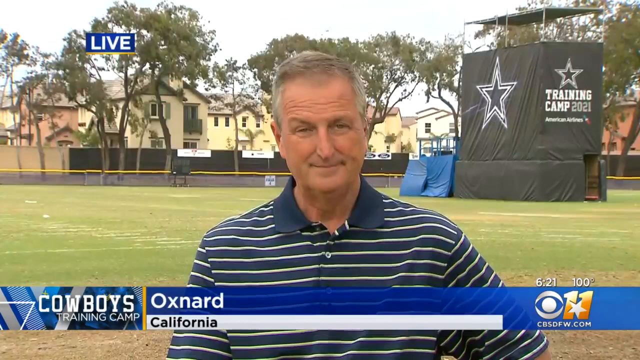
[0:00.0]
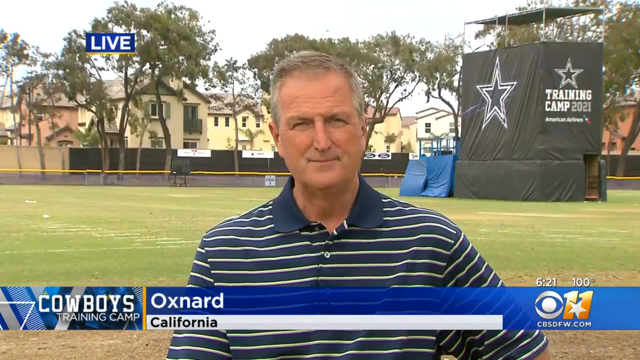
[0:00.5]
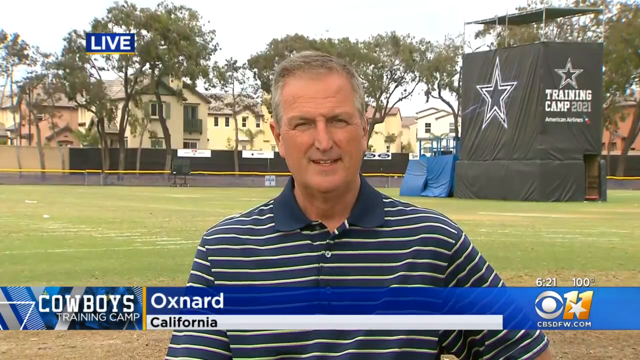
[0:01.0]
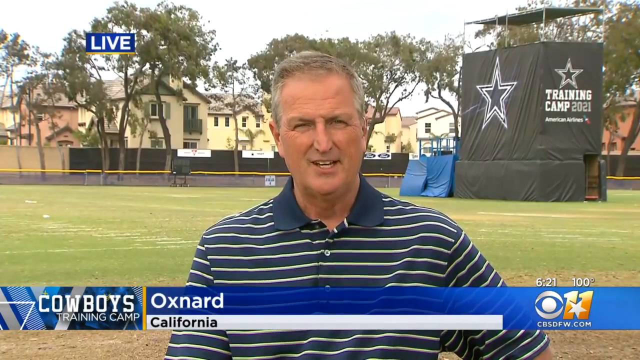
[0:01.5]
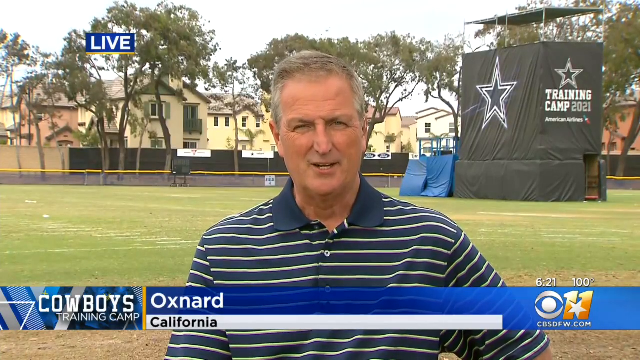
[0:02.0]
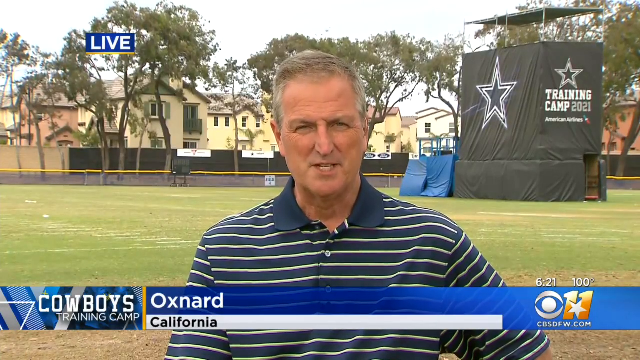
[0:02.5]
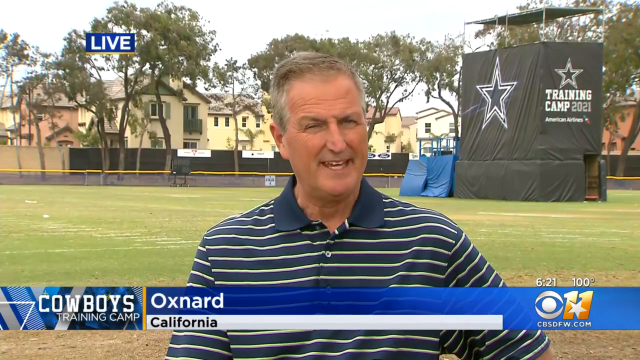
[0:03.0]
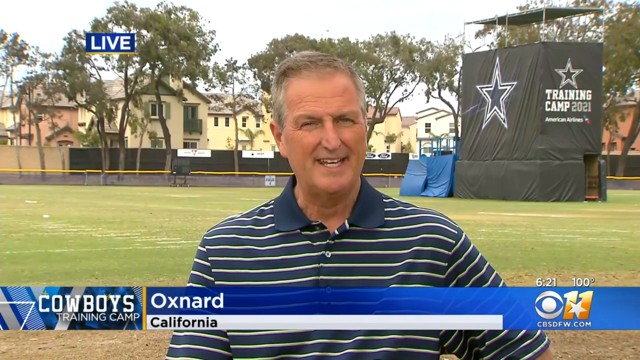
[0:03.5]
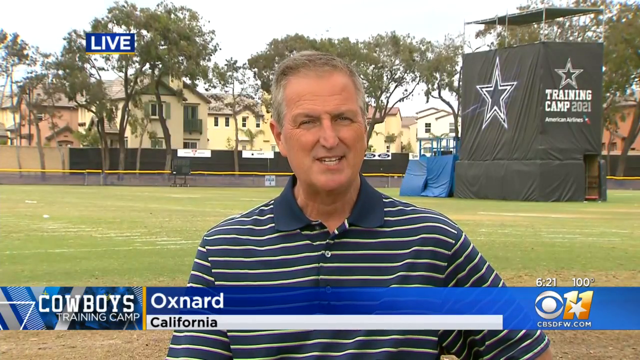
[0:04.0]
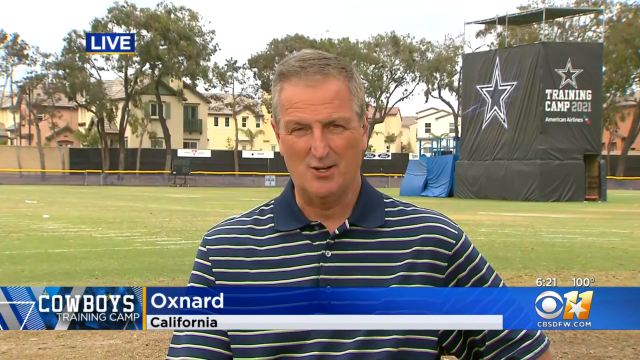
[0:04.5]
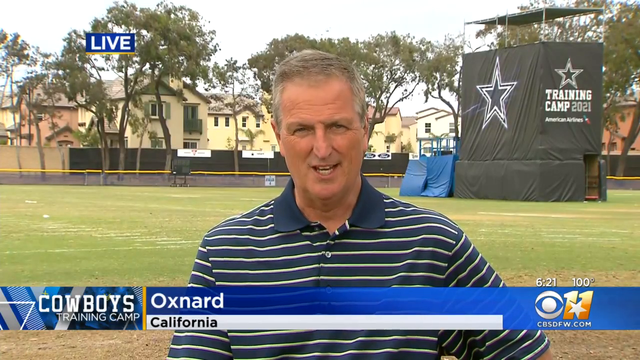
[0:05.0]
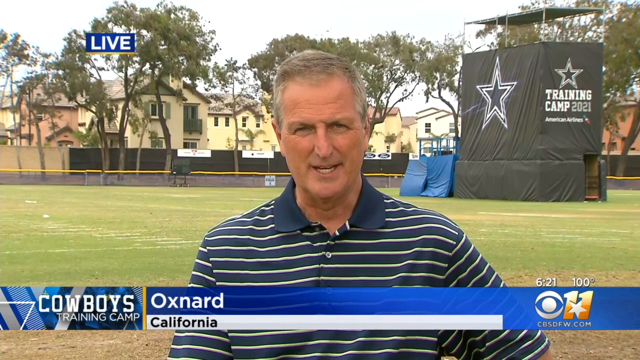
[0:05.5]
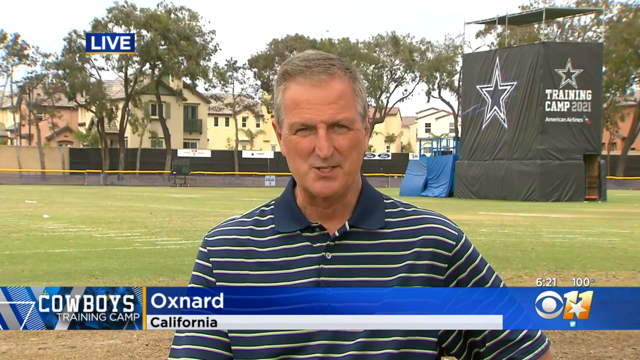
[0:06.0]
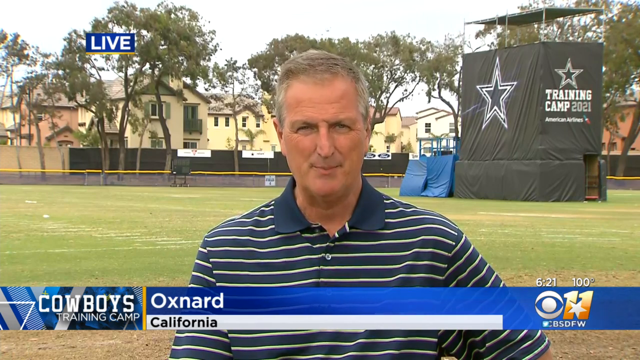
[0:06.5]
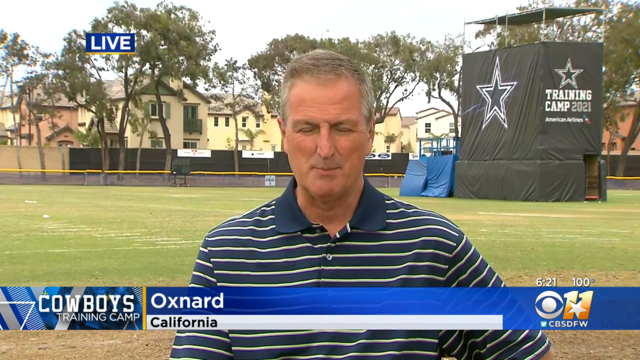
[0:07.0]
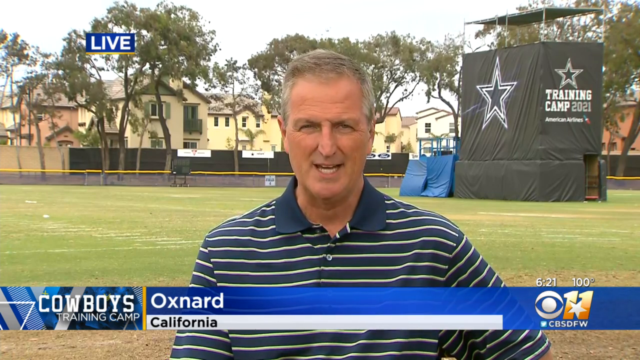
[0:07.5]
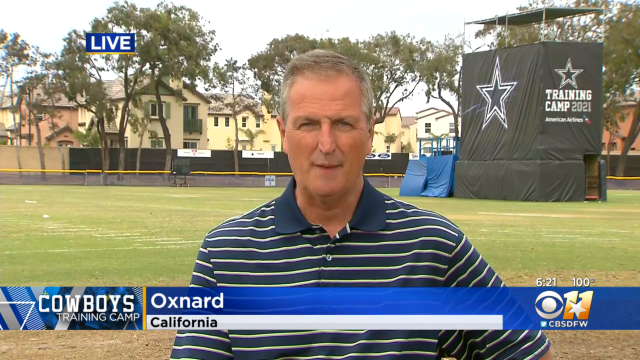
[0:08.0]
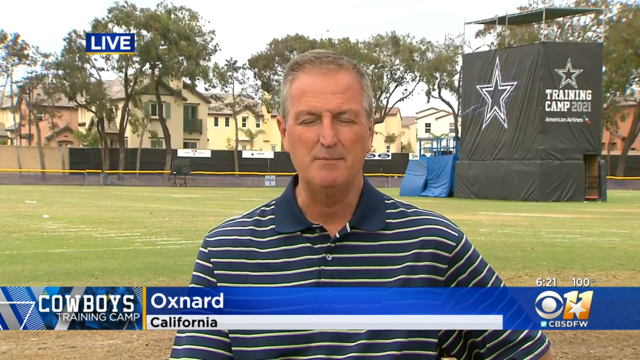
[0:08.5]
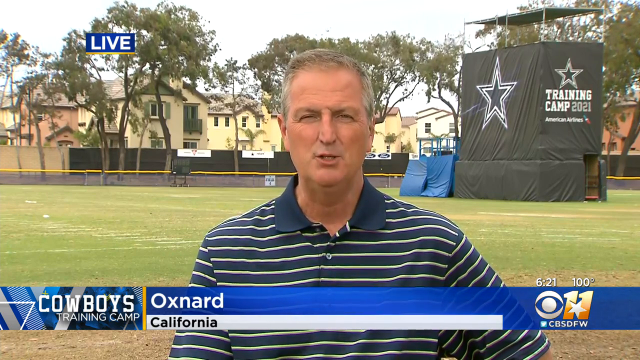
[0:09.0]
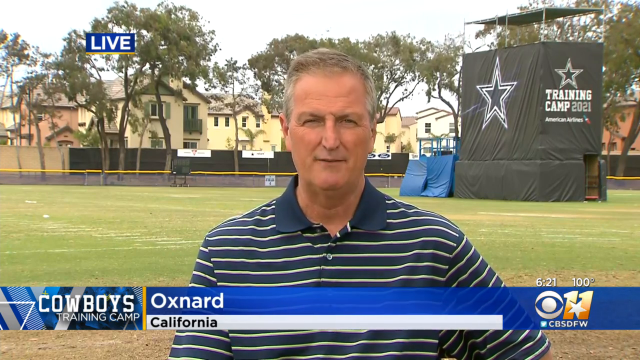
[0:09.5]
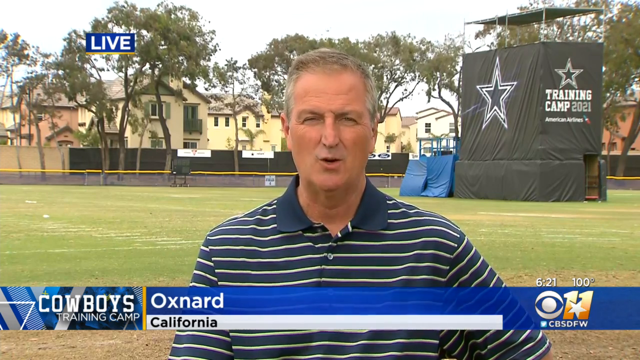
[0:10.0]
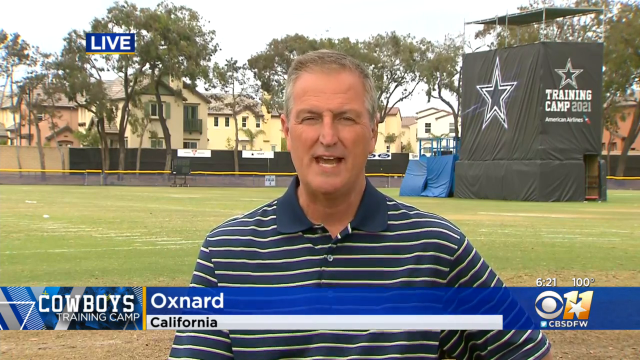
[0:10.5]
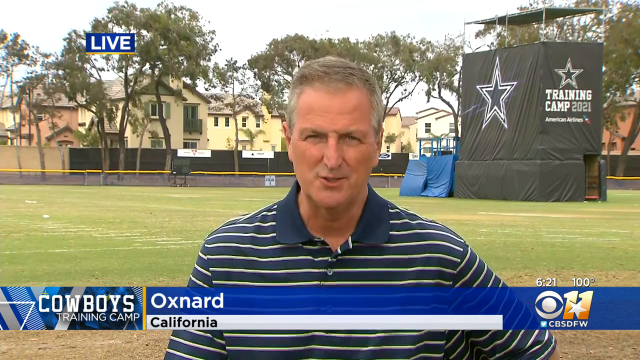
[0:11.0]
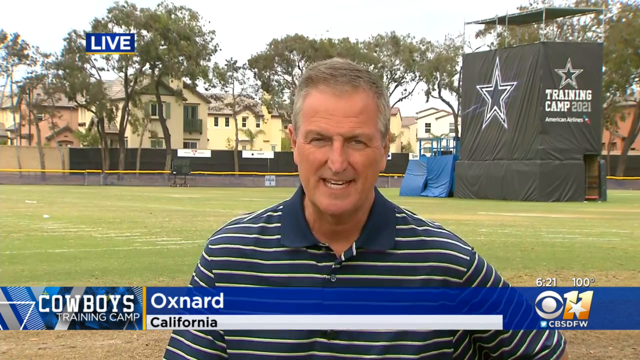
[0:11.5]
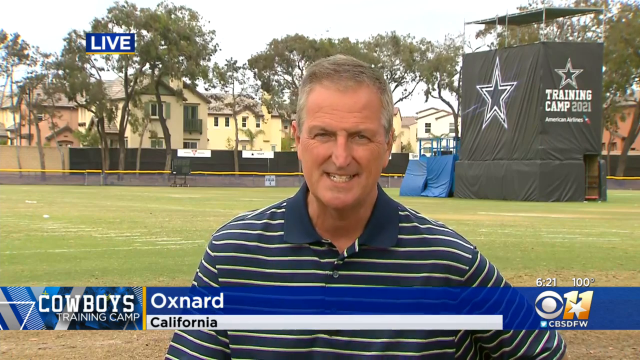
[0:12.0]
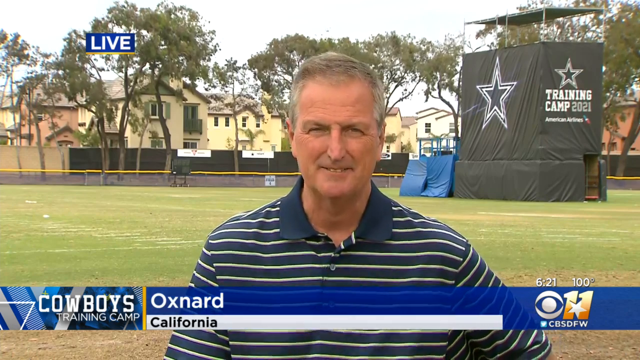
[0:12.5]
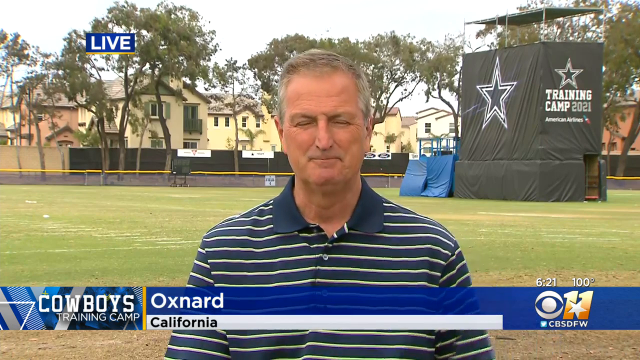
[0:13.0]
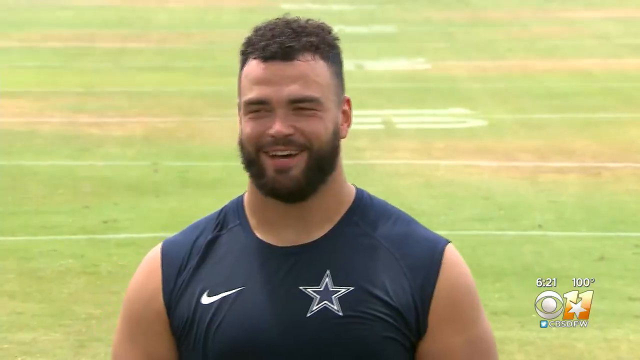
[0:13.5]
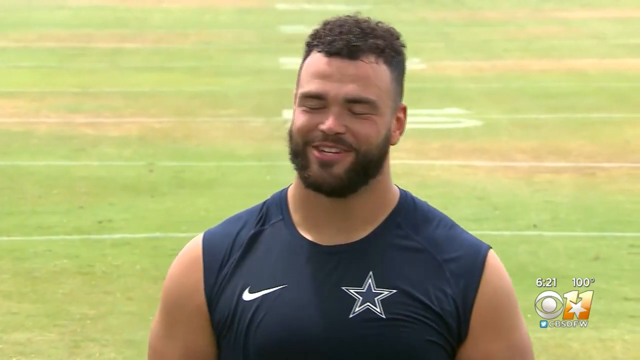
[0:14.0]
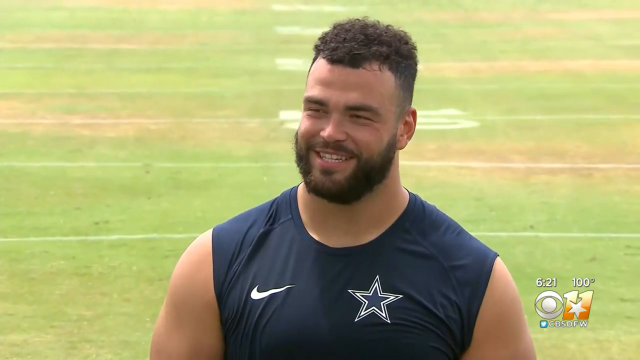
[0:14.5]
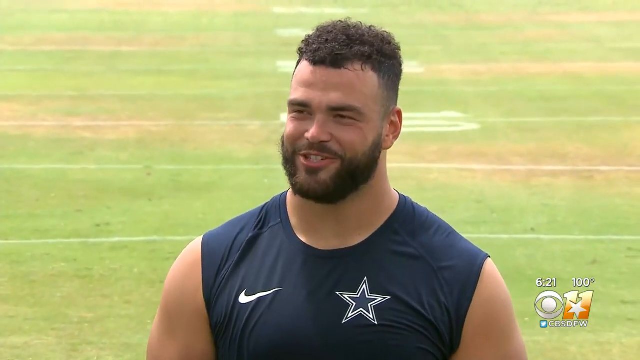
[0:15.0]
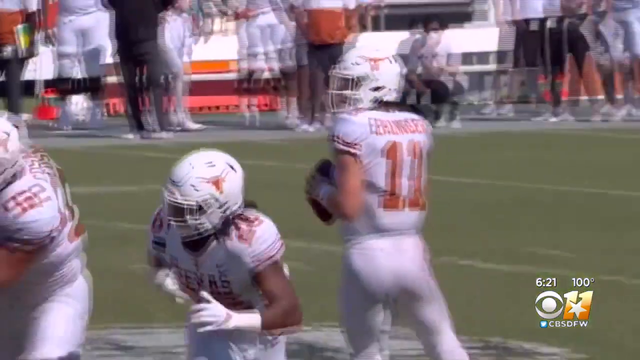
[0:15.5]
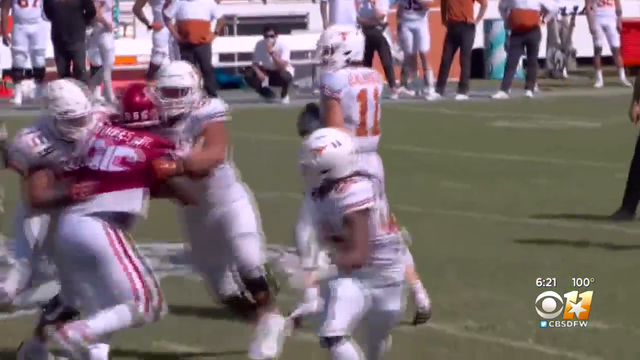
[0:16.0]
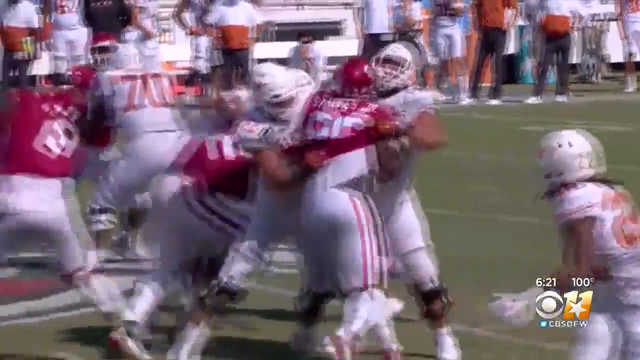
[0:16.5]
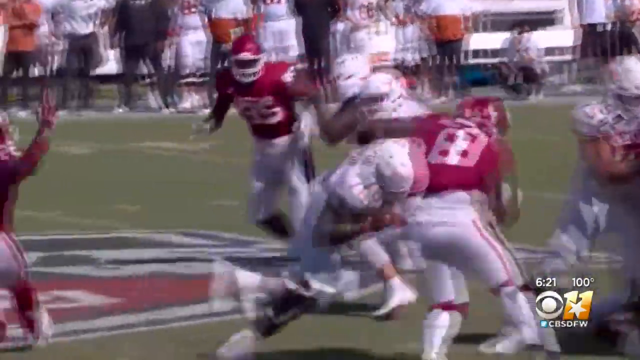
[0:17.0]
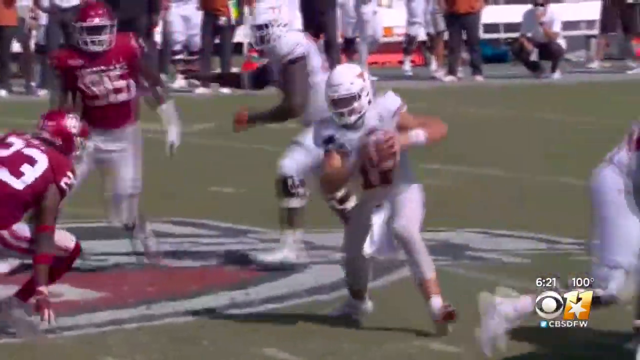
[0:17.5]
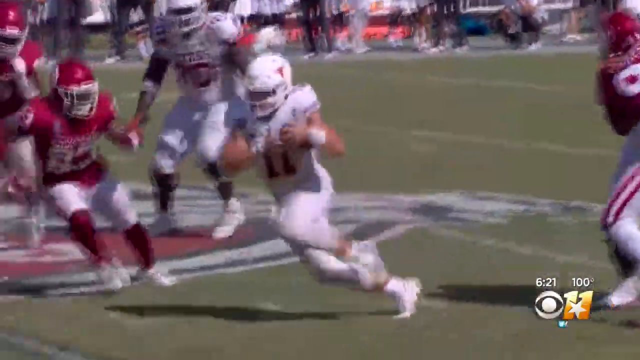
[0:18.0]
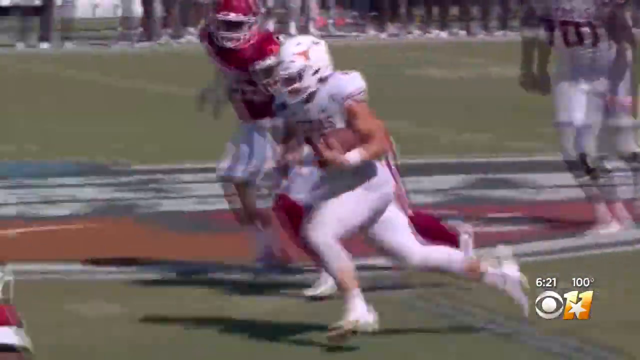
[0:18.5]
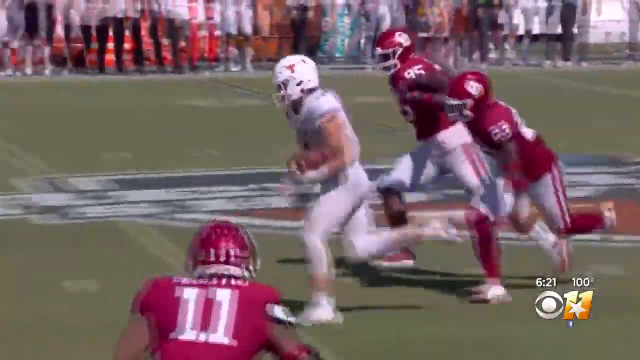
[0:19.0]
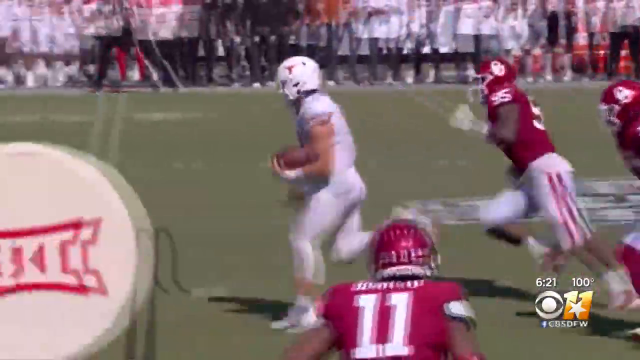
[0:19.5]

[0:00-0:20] A man gives a live interview to the camera. The words "Cowboys training camp" appear in the bottom left-hand corner, "Oxnard, California" is shown on the screen, and it appears to be a CBS broadcast. He talks to the camera, and the background seems to be a stadium or training ground. A structure to his right reads "training camp 2021", and there is also a big star and some mats. There is grass on the floor with markings, indicating a sports setting. A younger man who appears to be a player is then seen smiling and laughing. The video cuts to footage of people playing American football, wearing white helmets and sports uniforms. There is a team in white and a team in red, and the team in white carries the ball and pushes through the team in red toward their goal.